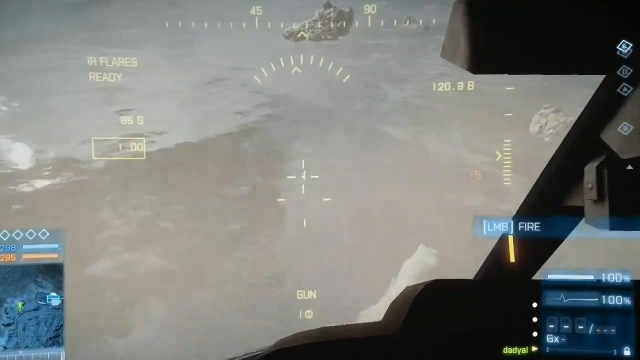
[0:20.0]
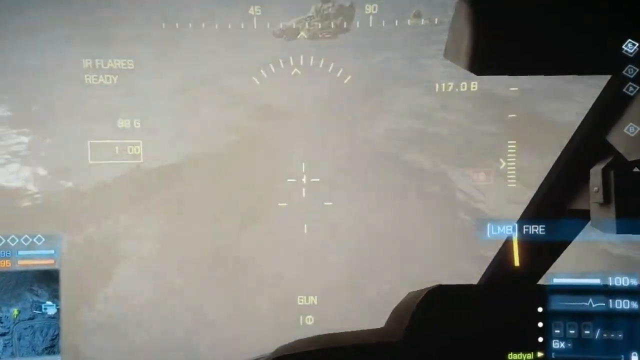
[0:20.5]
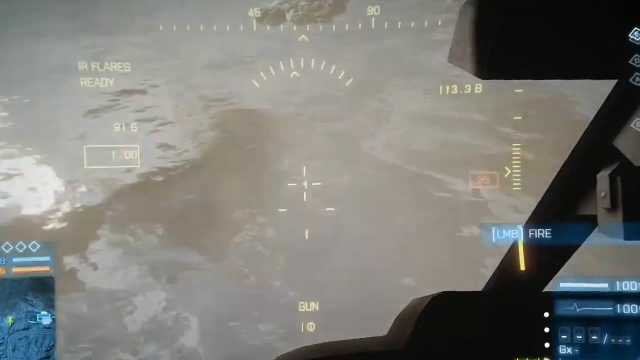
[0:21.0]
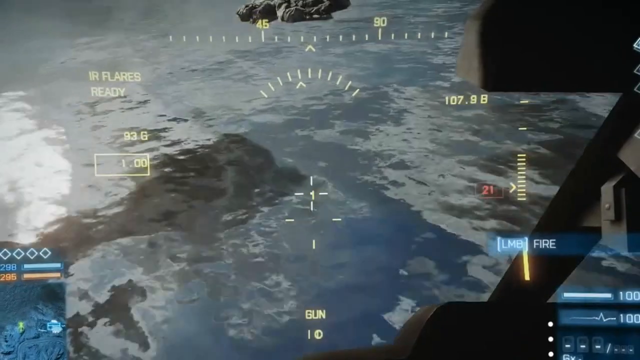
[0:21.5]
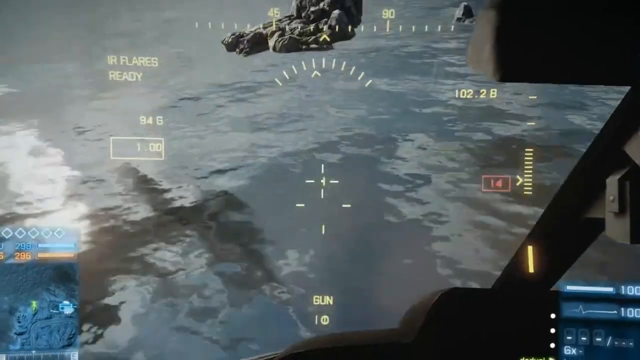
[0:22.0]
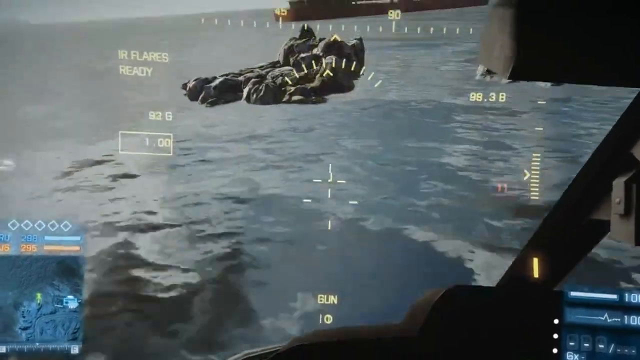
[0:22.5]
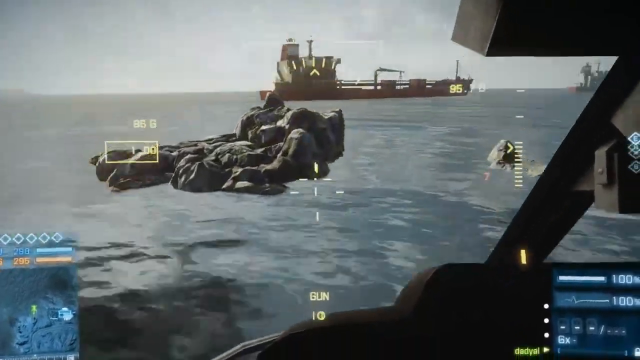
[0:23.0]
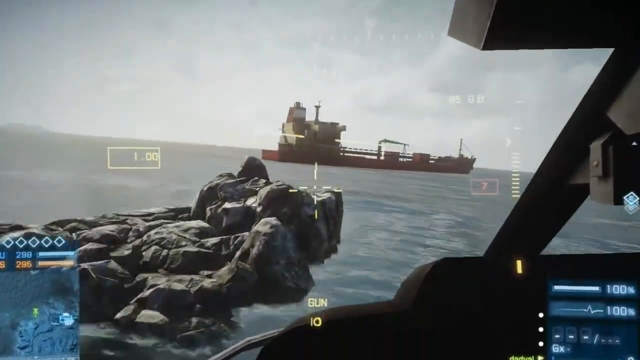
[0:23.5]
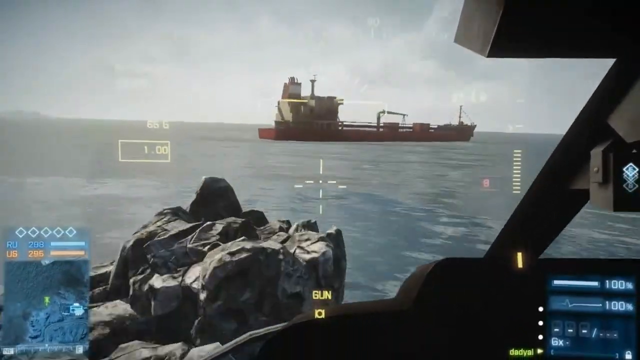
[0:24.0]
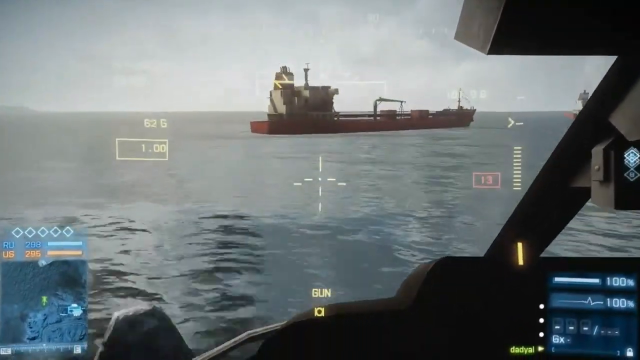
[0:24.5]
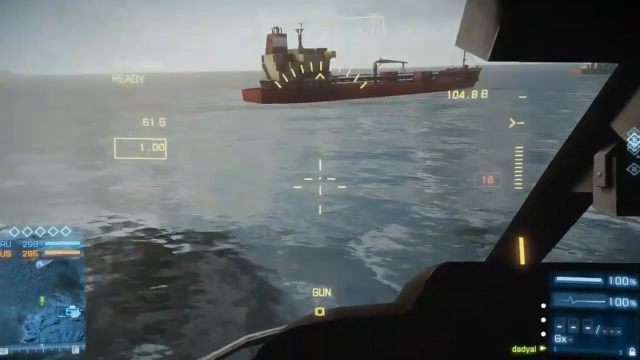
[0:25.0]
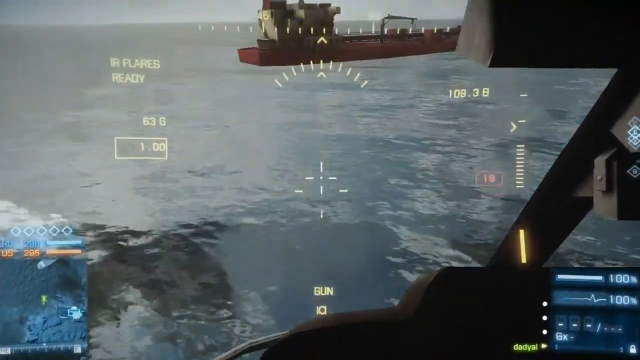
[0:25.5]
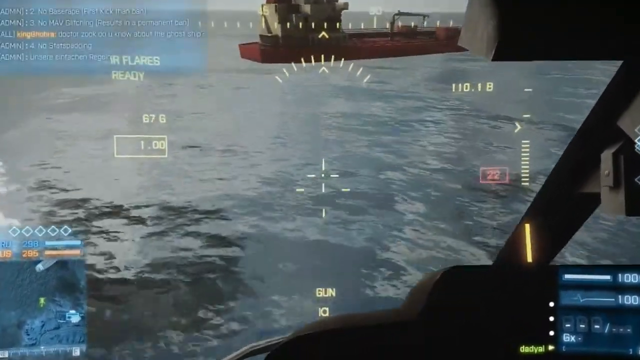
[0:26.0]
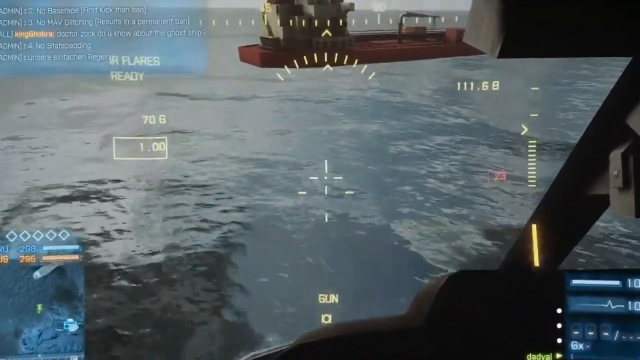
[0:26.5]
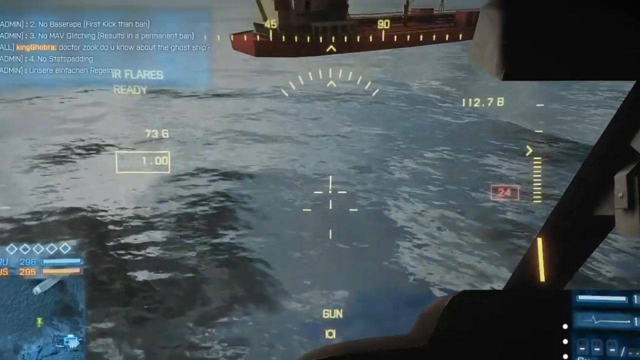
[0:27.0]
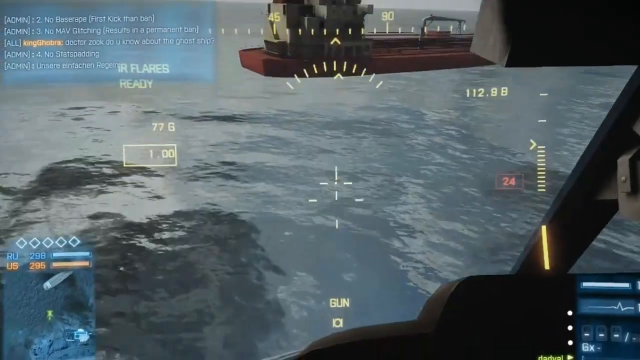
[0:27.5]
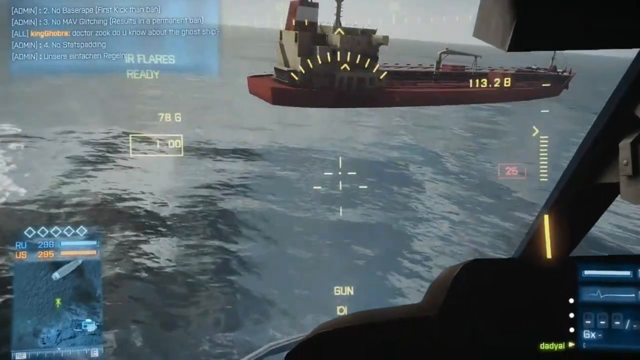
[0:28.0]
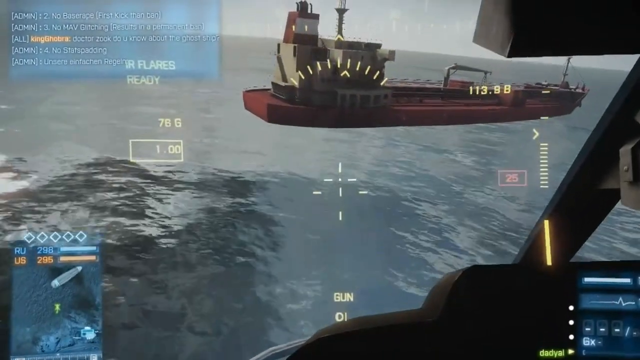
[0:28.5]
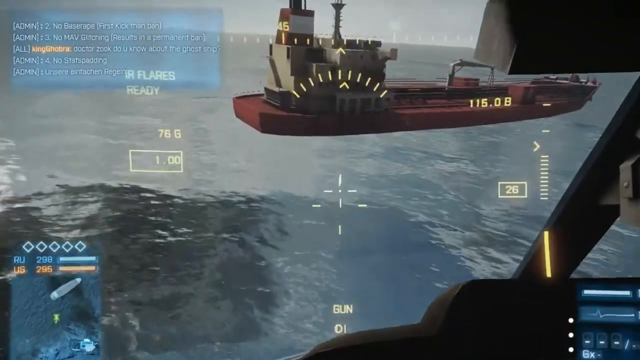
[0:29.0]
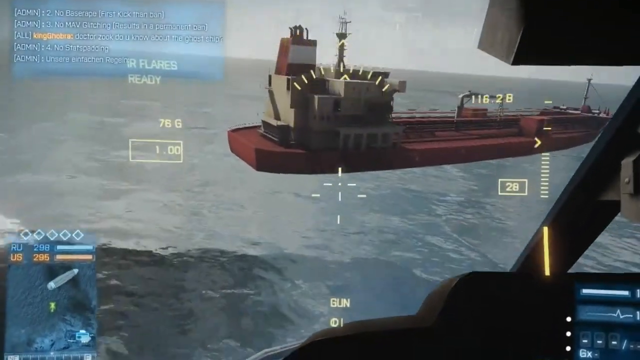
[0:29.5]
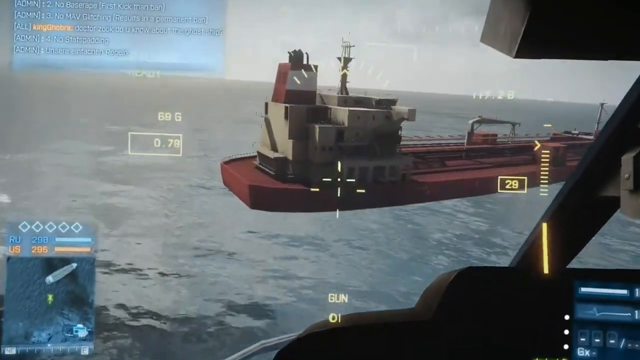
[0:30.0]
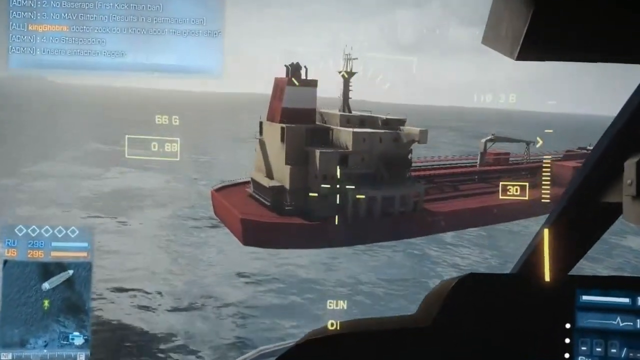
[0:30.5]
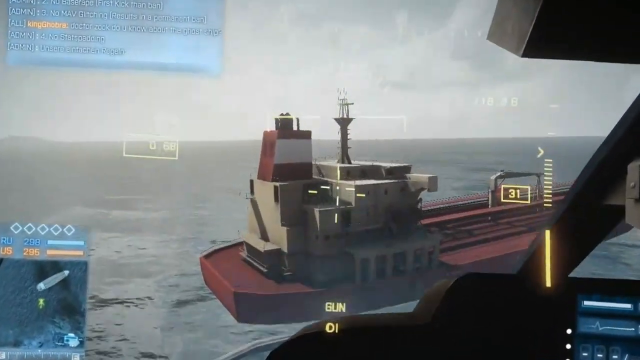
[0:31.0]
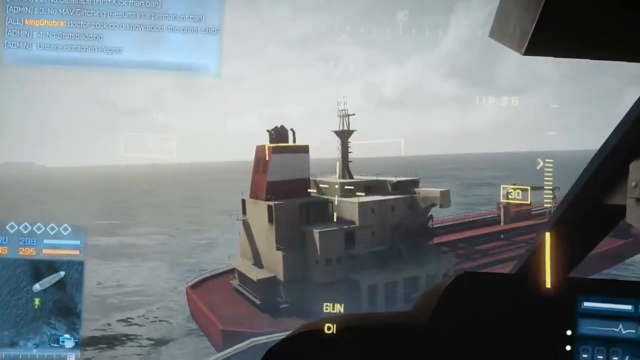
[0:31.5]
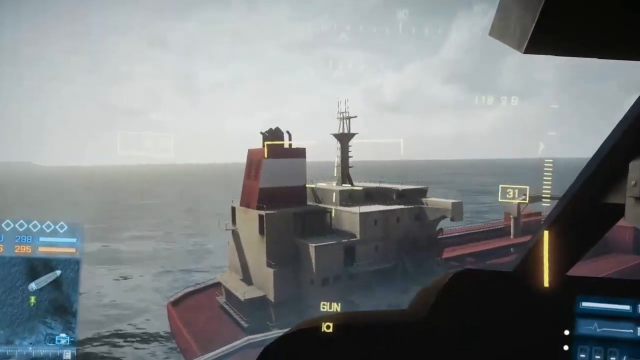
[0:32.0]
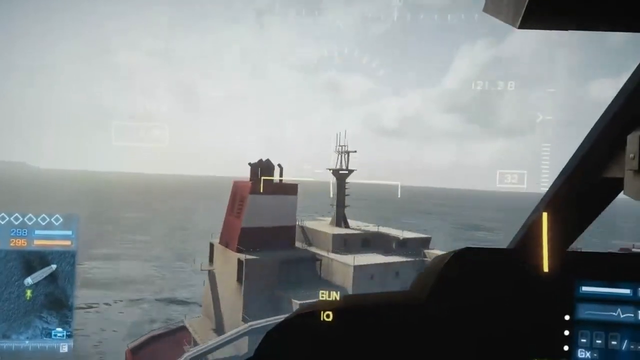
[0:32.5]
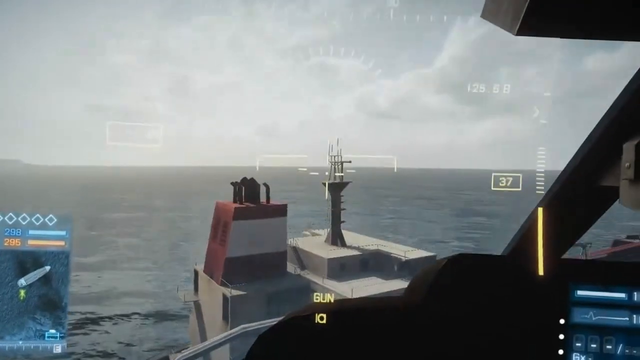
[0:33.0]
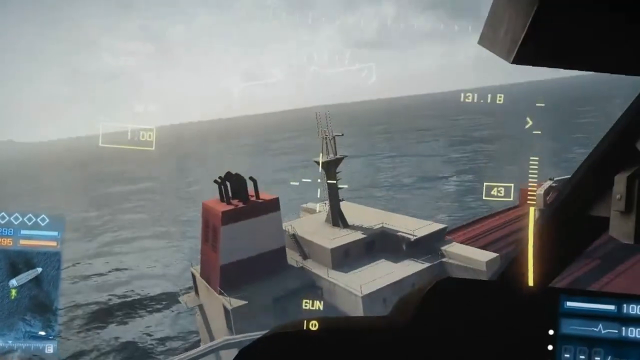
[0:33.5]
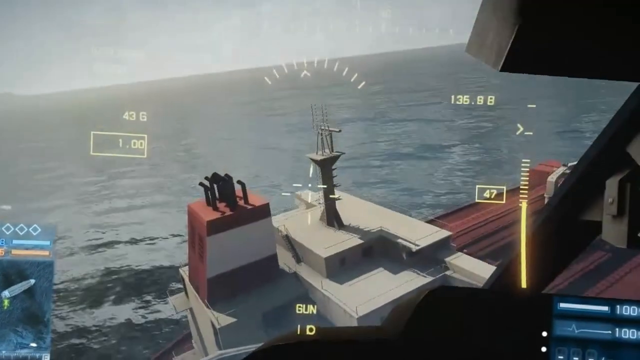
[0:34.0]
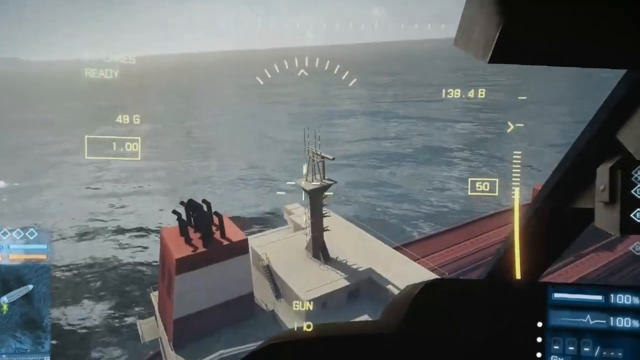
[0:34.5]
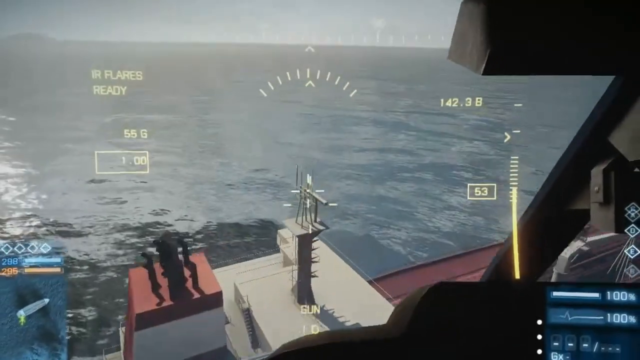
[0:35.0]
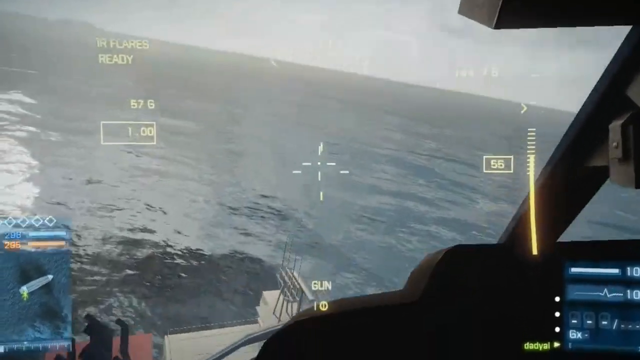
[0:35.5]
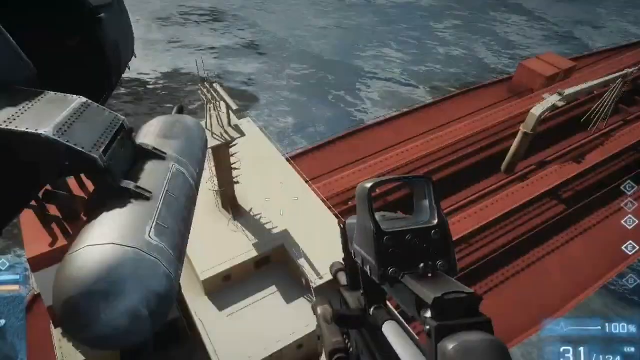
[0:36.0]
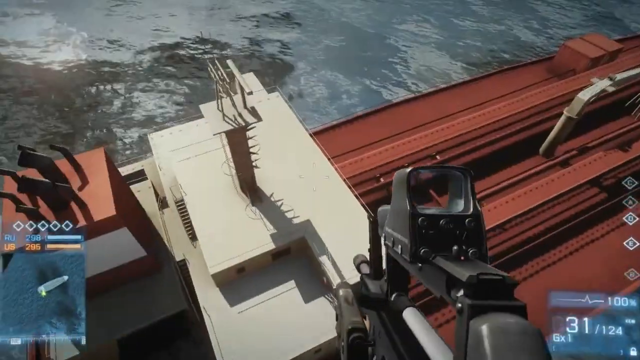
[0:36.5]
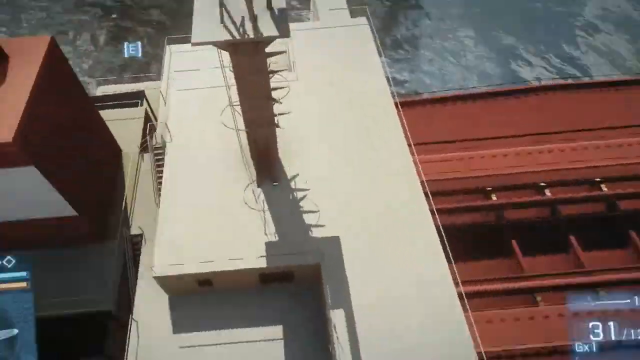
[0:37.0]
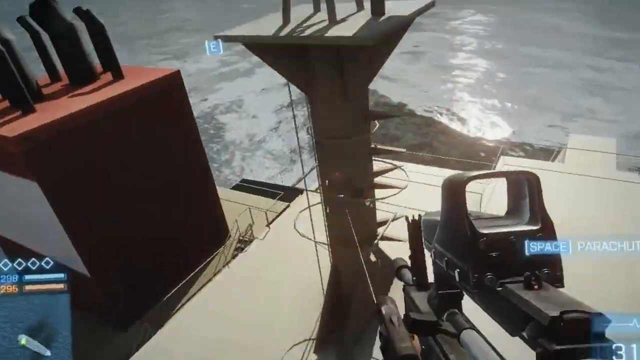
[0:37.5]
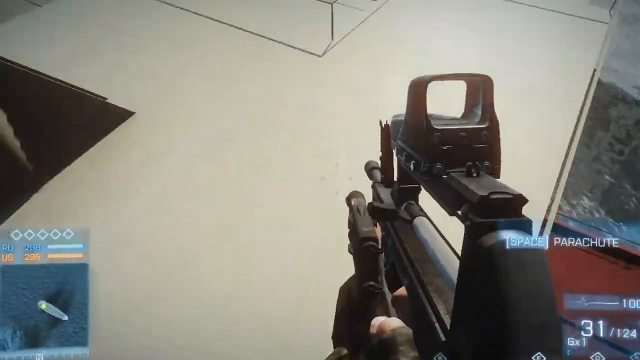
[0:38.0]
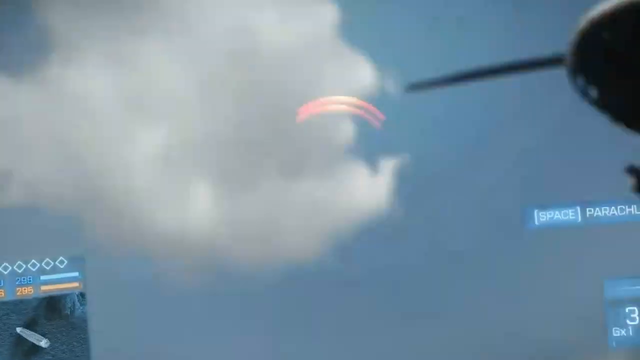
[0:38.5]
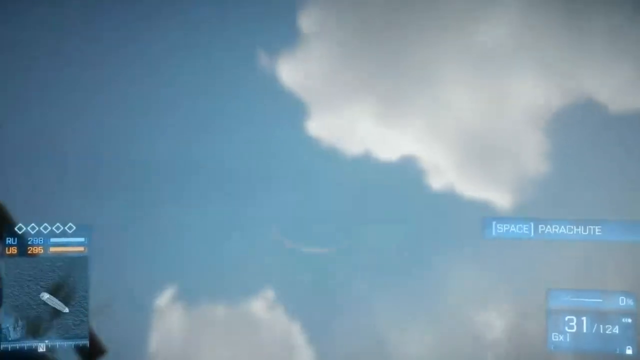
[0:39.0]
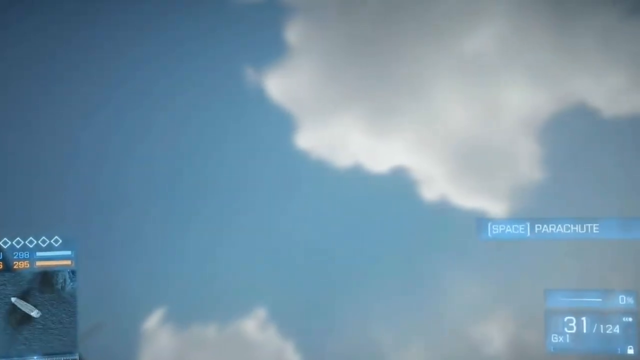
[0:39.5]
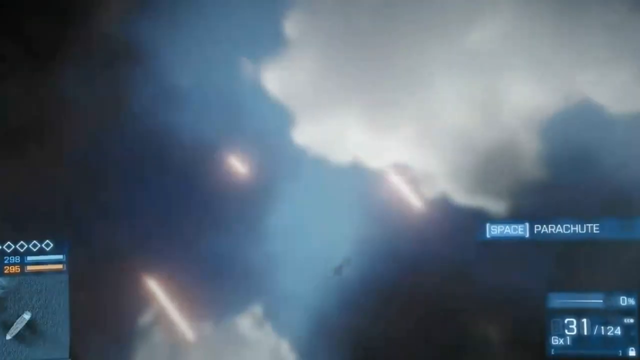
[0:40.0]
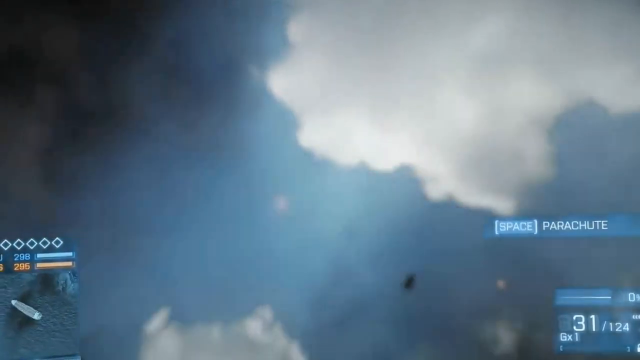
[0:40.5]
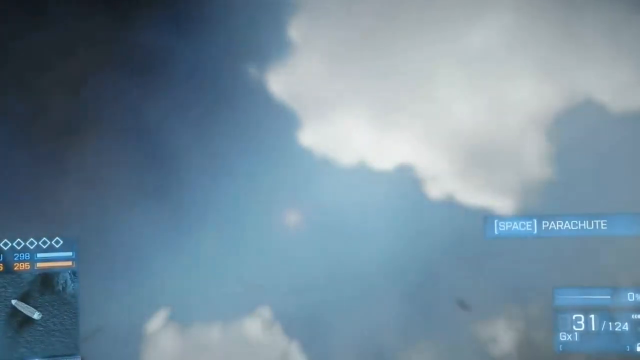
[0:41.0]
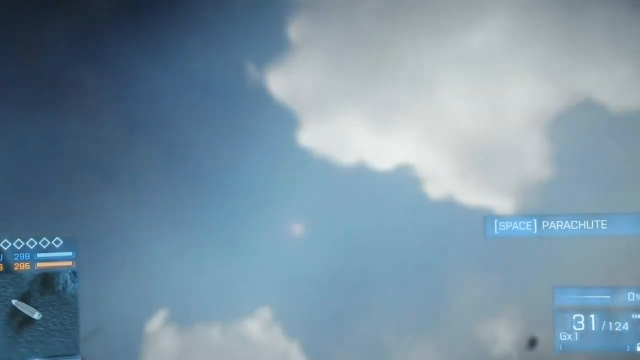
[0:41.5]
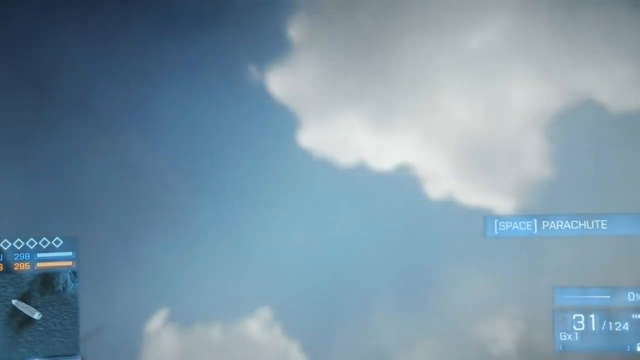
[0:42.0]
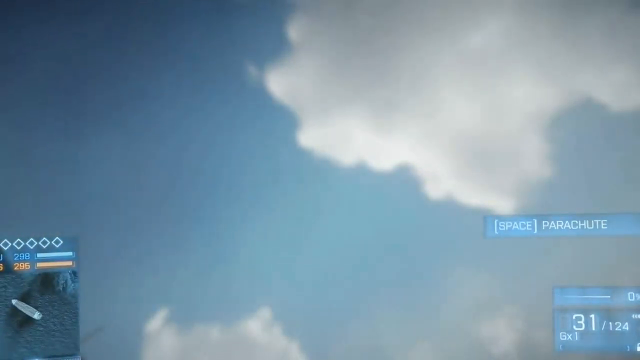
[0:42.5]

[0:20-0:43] The aircraft keeps progressing forward over a lot of water and gets closer to it. A big rock is in the ocean water, and a ship, a carrier ship, is off in the distance. The aircraft goes over the rock, with the targets pointed at the water, then approaches the carrier ship and gets really close to it. It flies up above the carrier ship, and the player exits the aircraft and, in first-person perspective, jumps onto the top of the ship, landing on it. The player has a very big gun, like a big giant rifle. The character appears to have died; it looks like they were supposed to use their parachute. The point of view is now looking at the blue sky with a white cloud, and a window pops up at the top that says "bad luck".